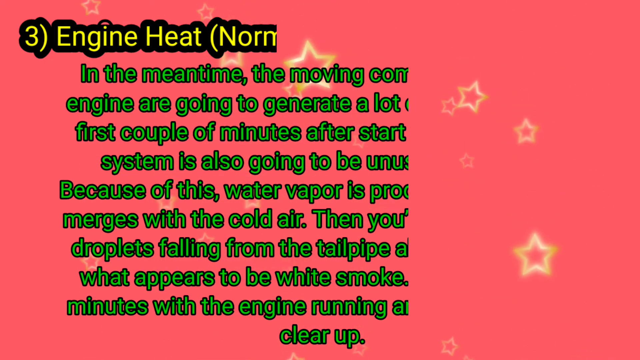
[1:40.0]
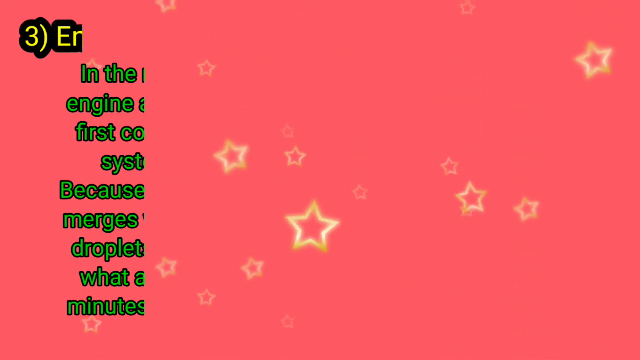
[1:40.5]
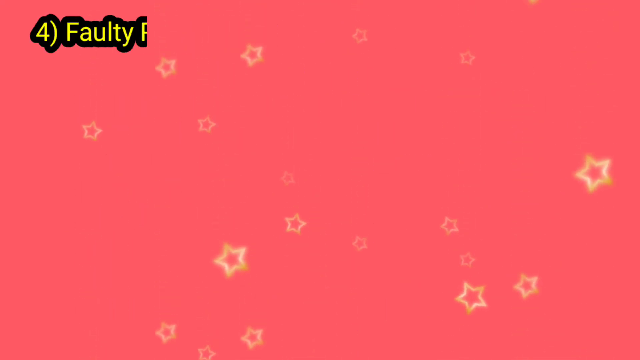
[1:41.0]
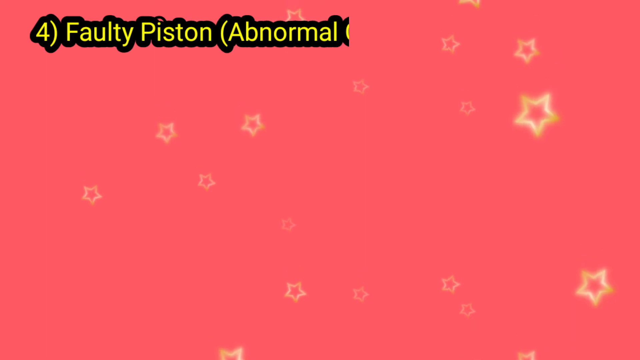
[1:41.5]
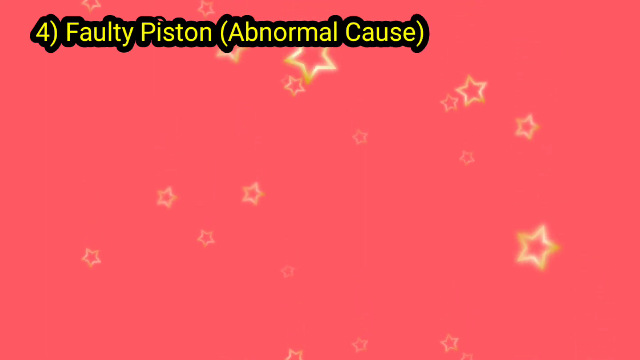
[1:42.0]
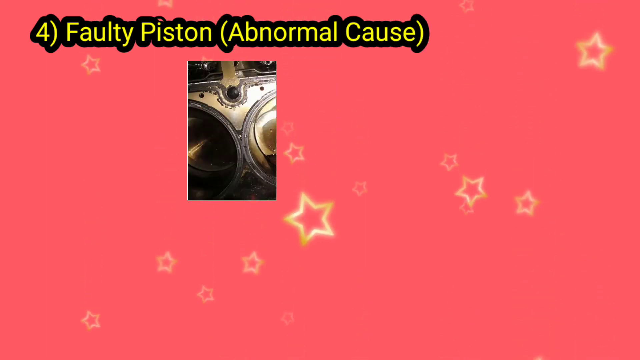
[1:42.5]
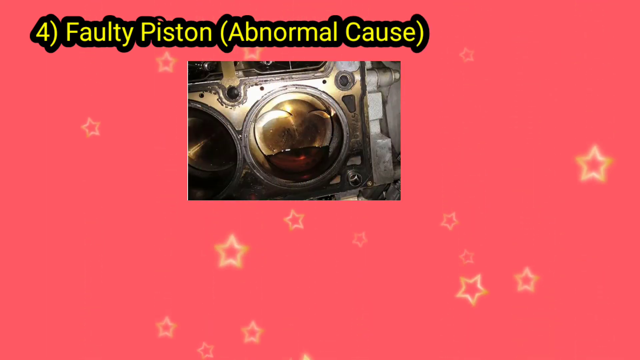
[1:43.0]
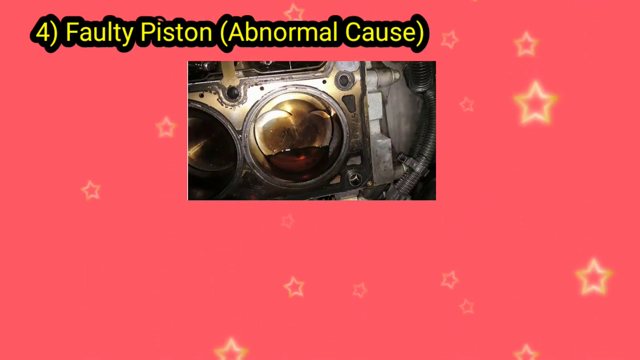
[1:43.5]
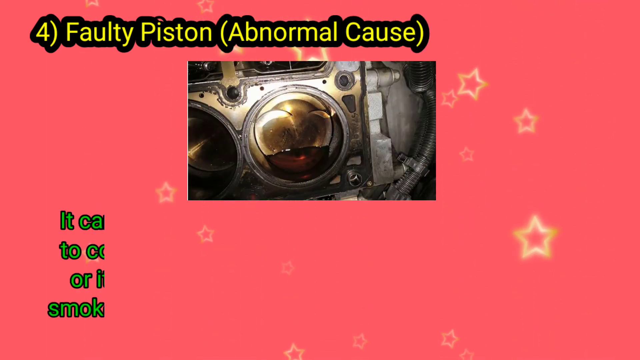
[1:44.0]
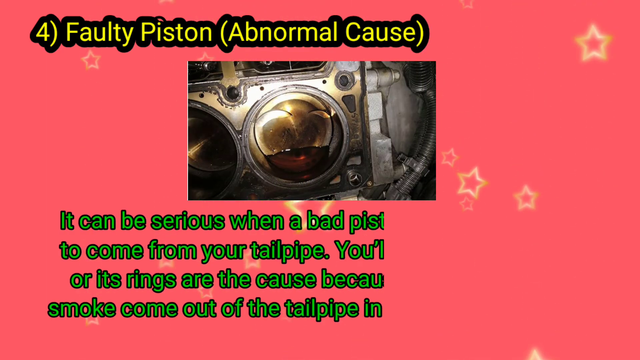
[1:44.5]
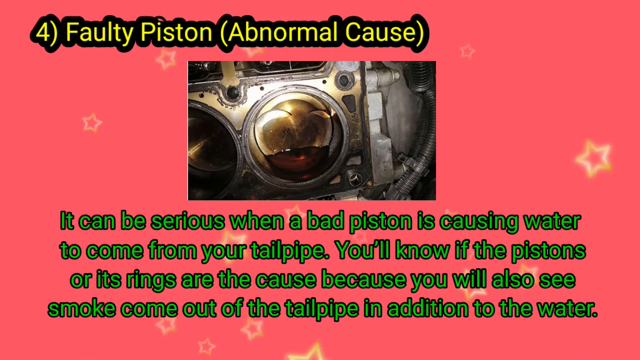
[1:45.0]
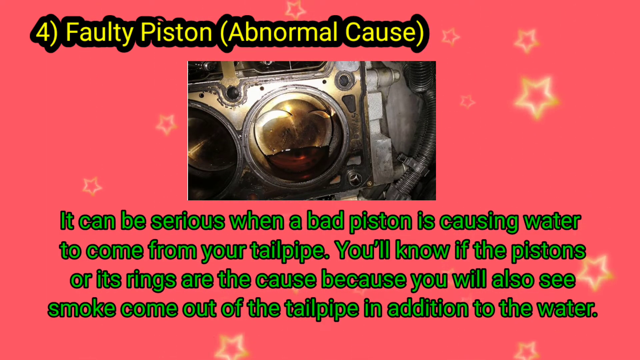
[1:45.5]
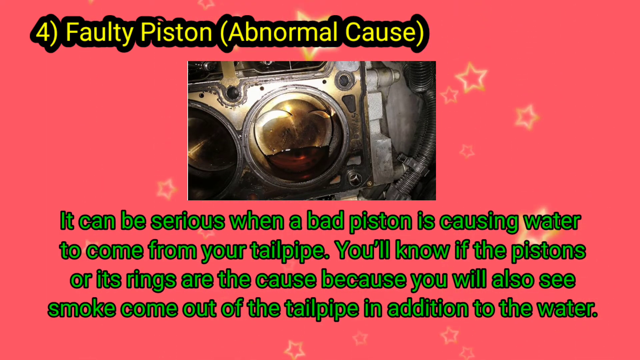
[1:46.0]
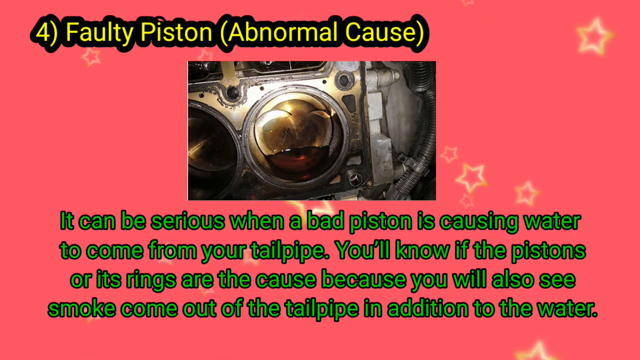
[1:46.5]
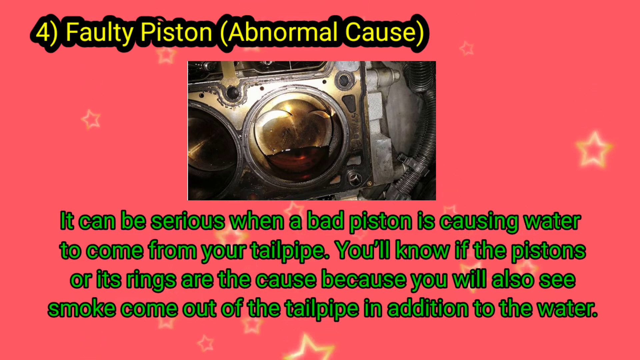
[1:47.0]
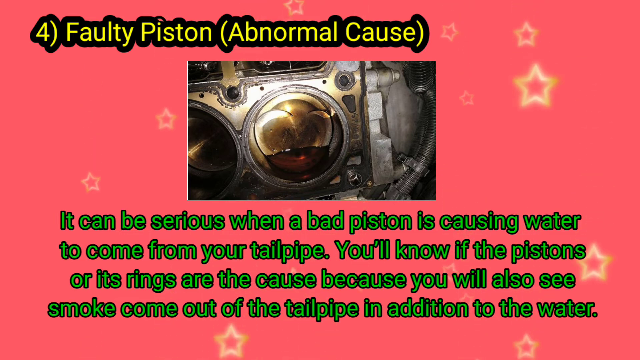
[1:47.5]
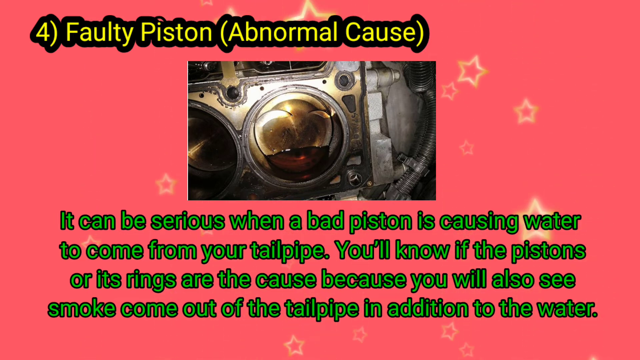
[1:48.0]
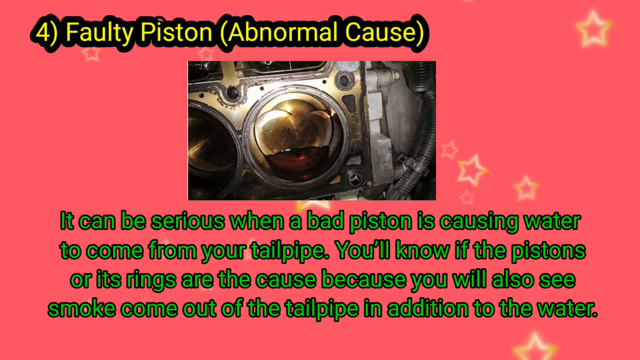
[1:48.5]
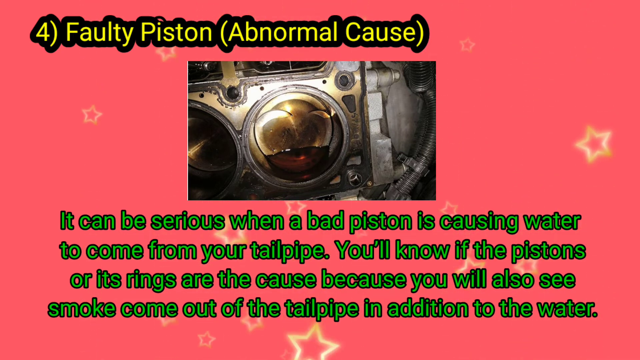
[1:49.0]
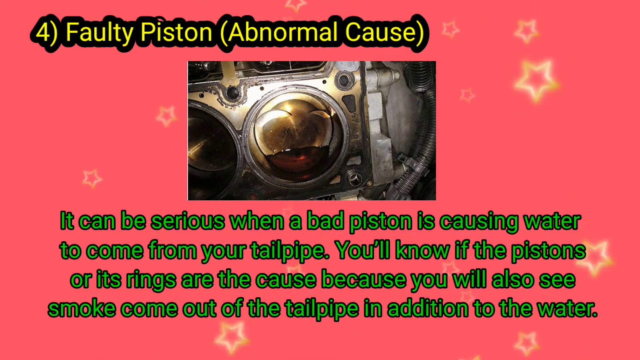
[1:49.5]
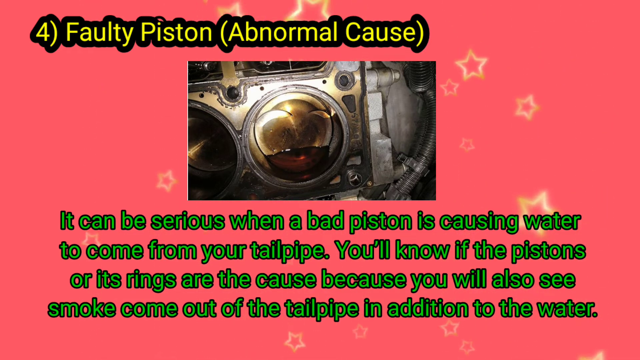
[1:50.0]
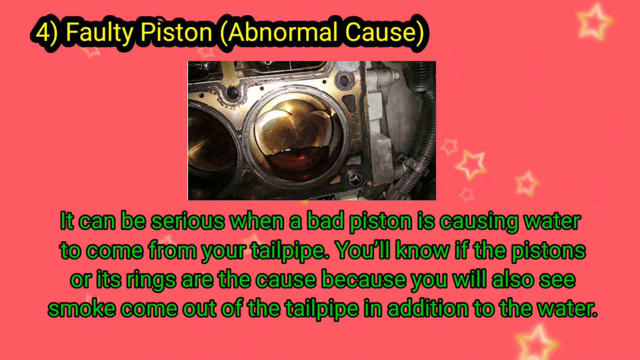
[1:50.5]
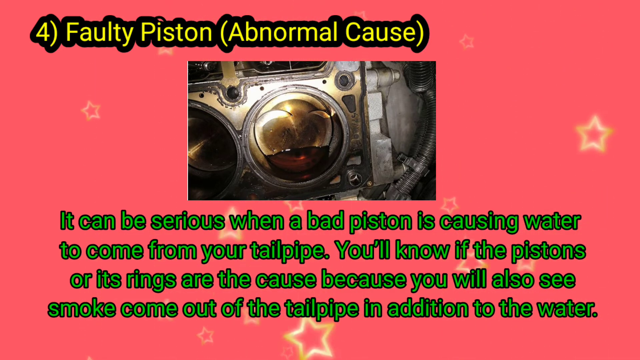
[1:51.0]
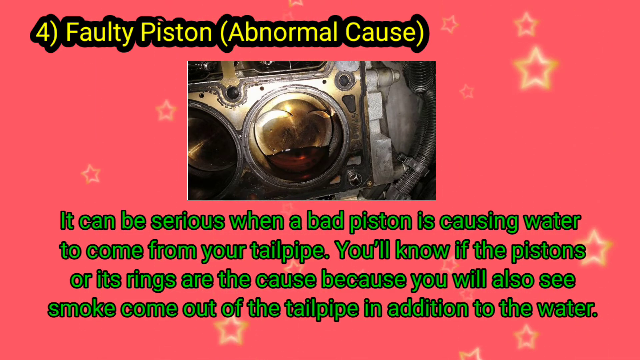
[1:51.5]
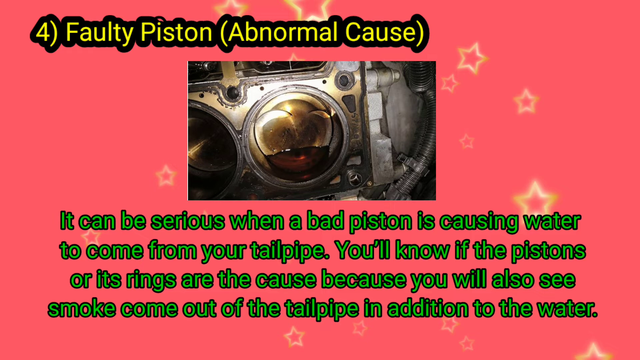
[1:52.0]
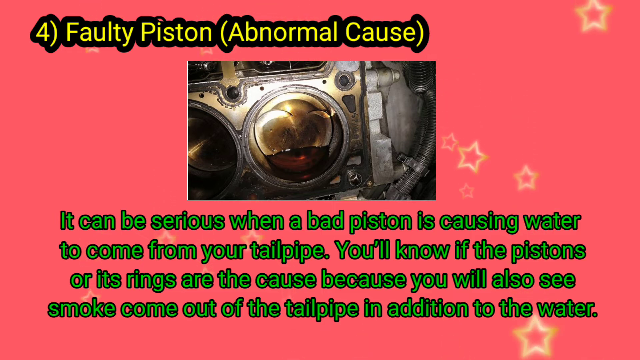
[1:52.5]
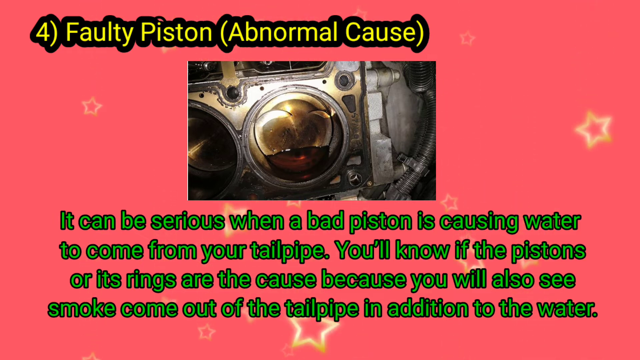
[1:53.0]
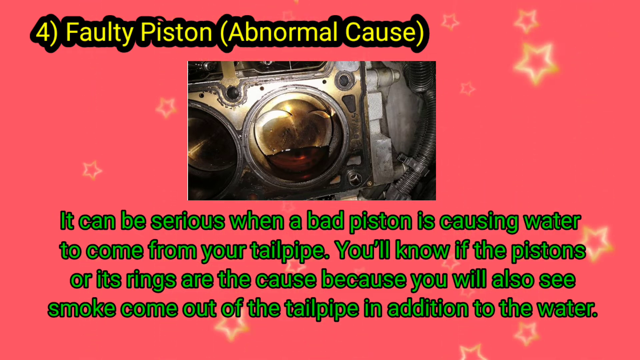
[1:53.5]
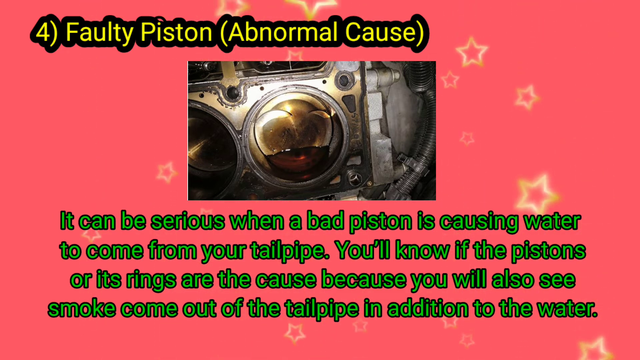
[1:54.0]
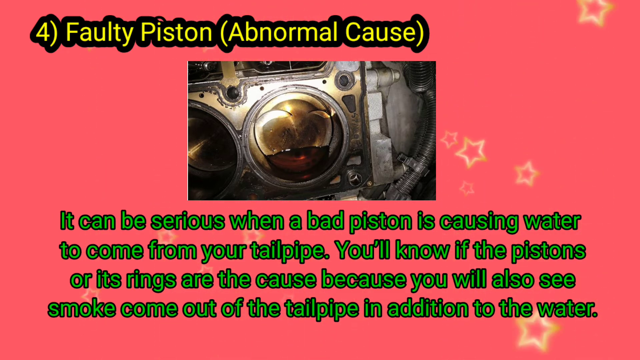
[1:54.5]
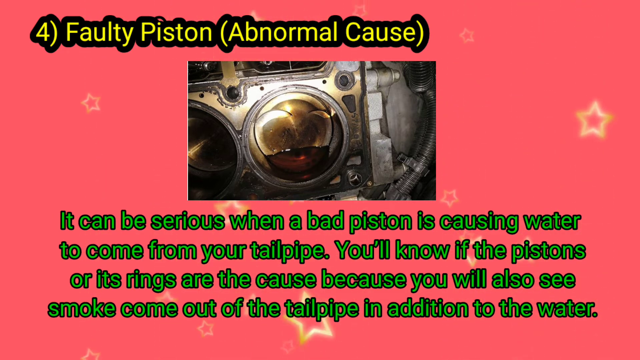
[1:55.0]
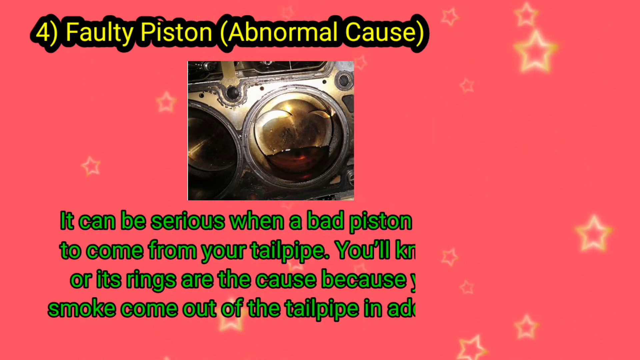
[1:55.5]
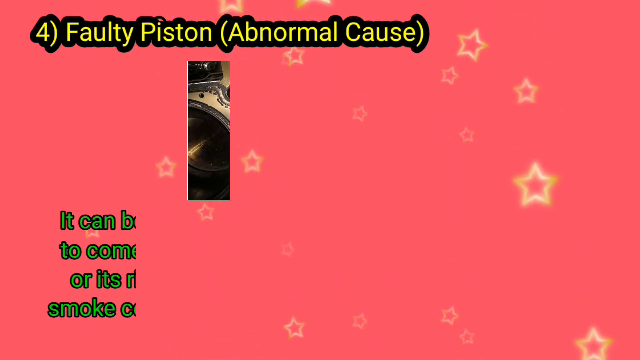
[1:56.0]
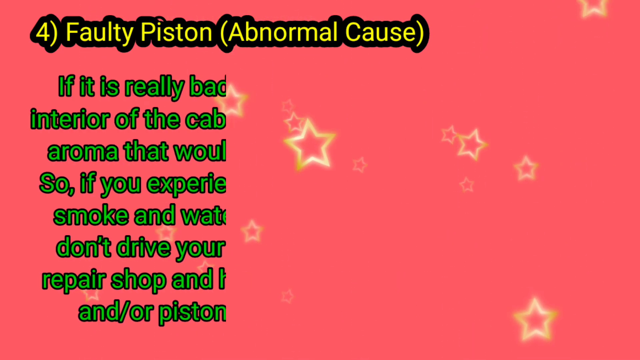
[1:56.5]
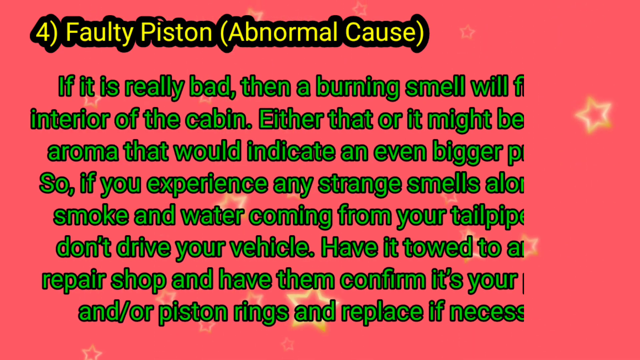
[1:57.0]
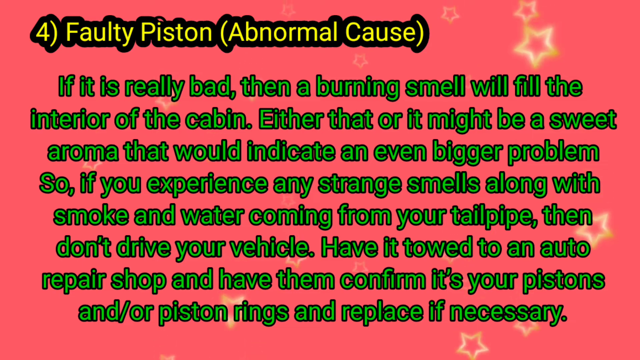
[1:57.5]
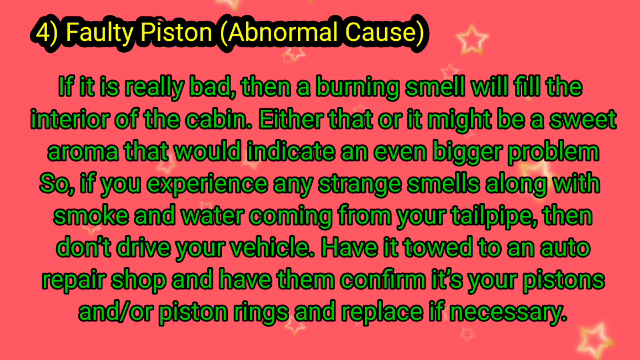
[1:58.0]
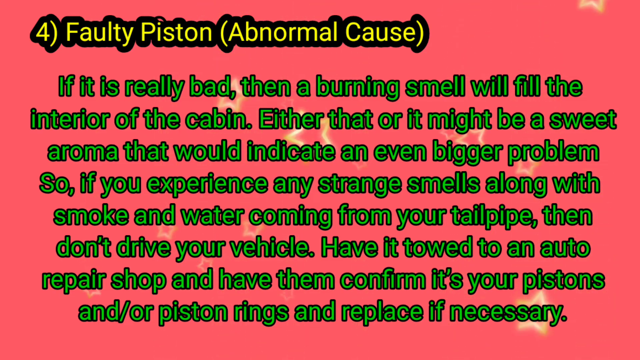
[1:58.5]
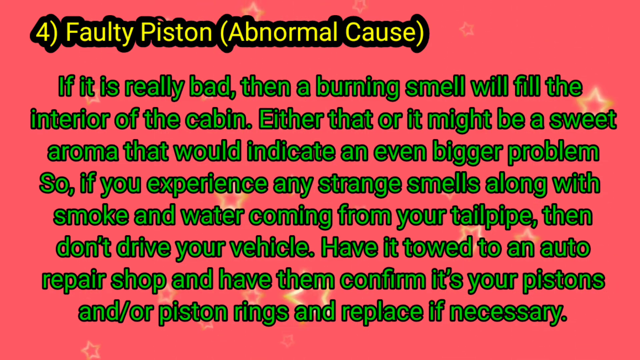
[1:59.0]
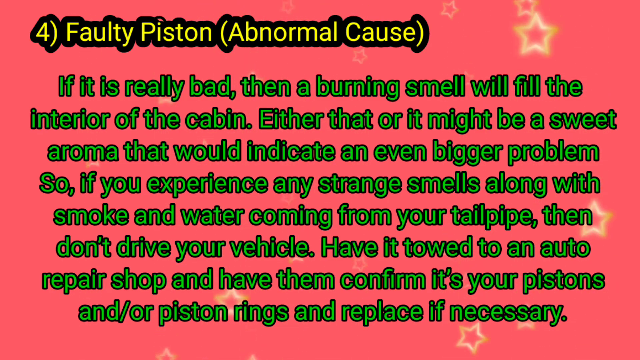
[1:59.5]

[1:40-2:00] Yellow stars fall from the top all the way down over a pink background. Yellow lettering at the top reads "four faulty pistons, abnormal cause". The photograph in the top center shows gray metal with two rounded circles, each with a gold rounded circle on the inside. Green lettering below reads "it can be serious when a bad piston is causing water to come from your tailpipe. You'll know if the pistons or its rings are the cause because you'll also see smoke coming out of the tailpipe in addition to the water." The green lettering is then replaced with a new set reading "If it is really bad, then a burning smell will fill the interior of the cabin. Either that or it might be a sweet aroma that would indicate an even bigger problem. So if you experience any strange smells along with smoke and water coming from your tailpipe, then don't drive your vehicle. Have it towed to an auto repair shop and have them confirm it's your pistons and or piston rings and replace if necessary."